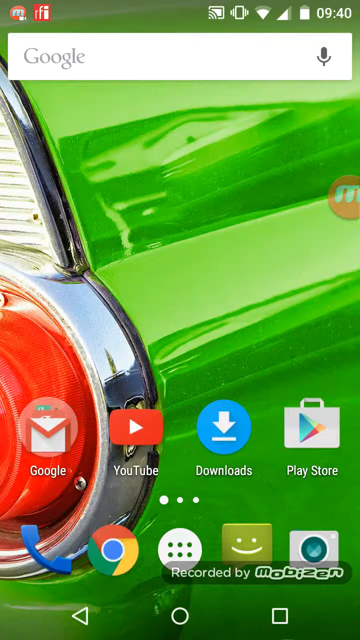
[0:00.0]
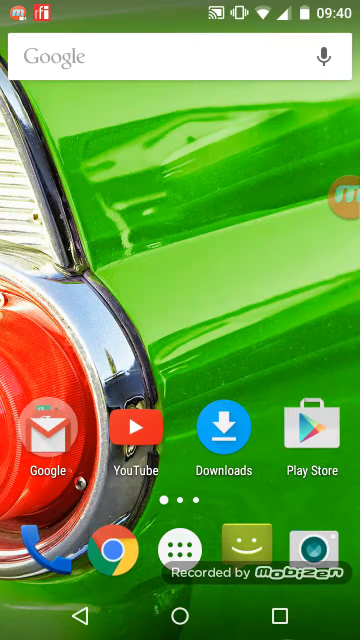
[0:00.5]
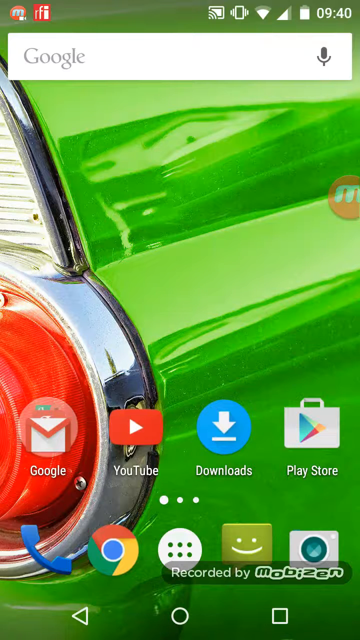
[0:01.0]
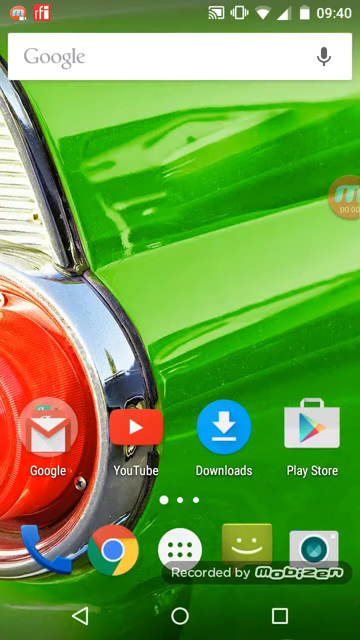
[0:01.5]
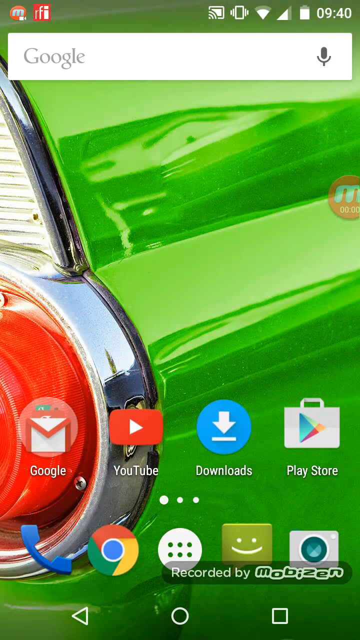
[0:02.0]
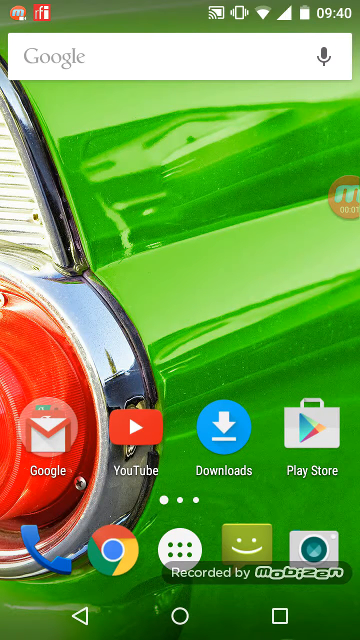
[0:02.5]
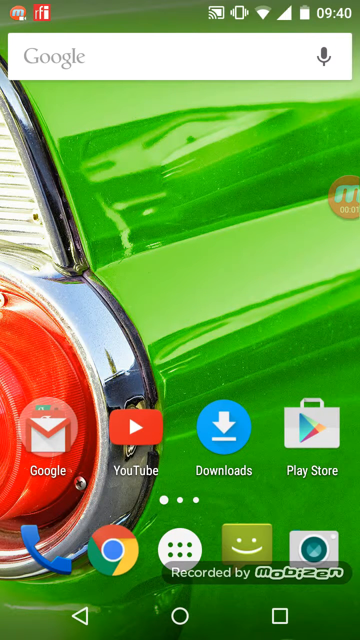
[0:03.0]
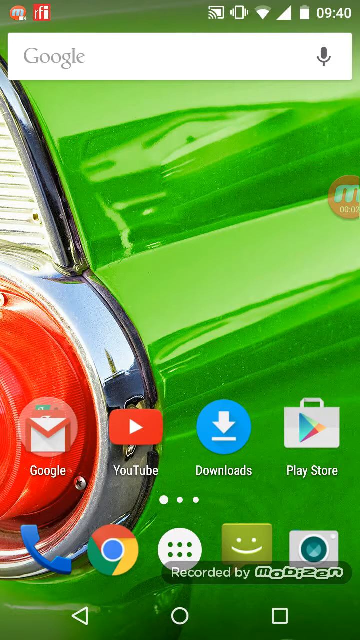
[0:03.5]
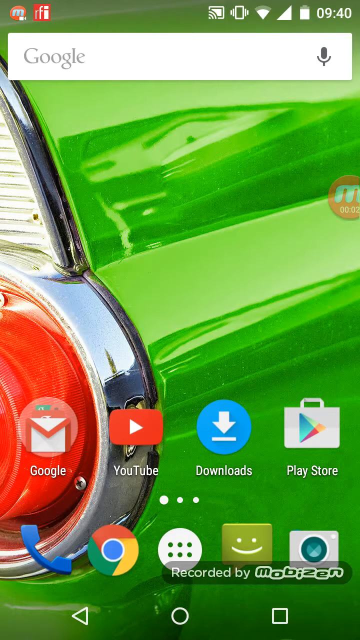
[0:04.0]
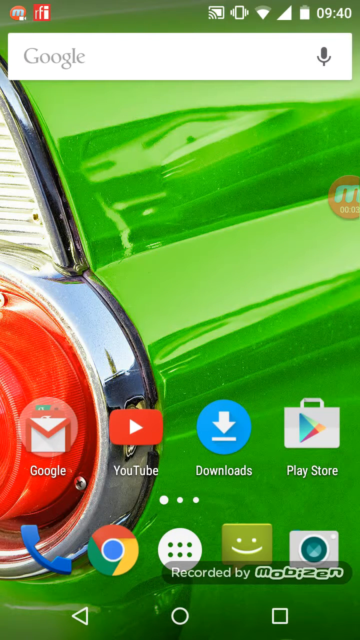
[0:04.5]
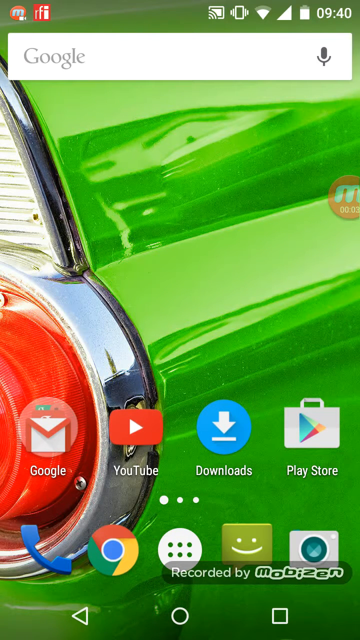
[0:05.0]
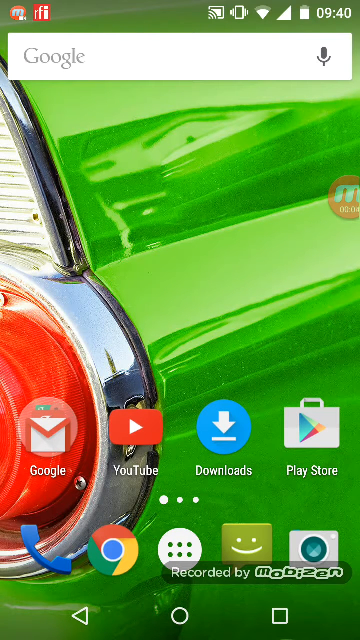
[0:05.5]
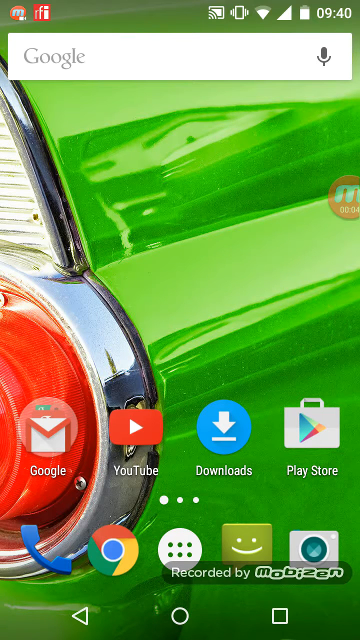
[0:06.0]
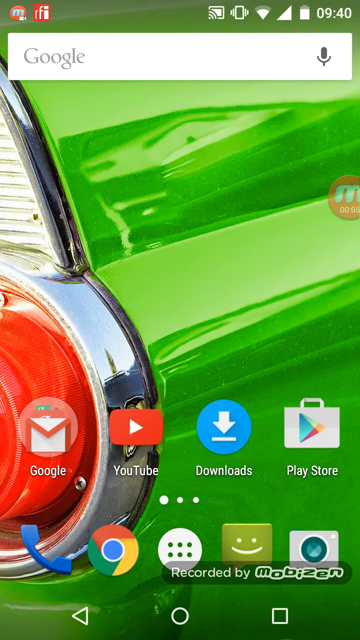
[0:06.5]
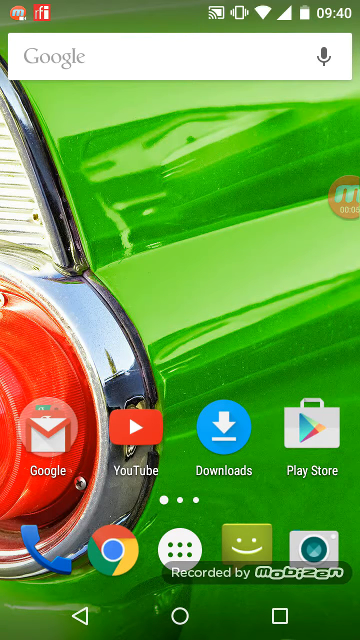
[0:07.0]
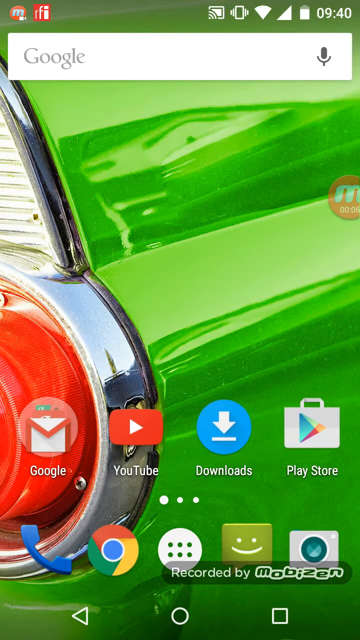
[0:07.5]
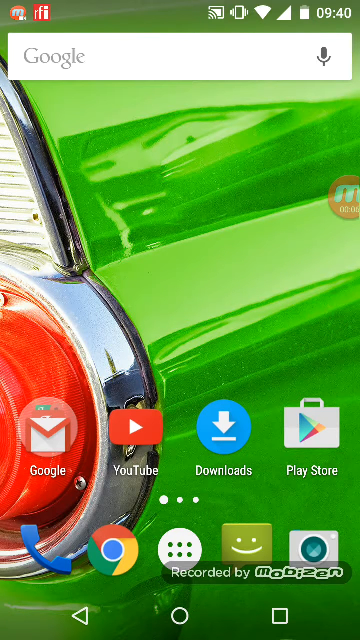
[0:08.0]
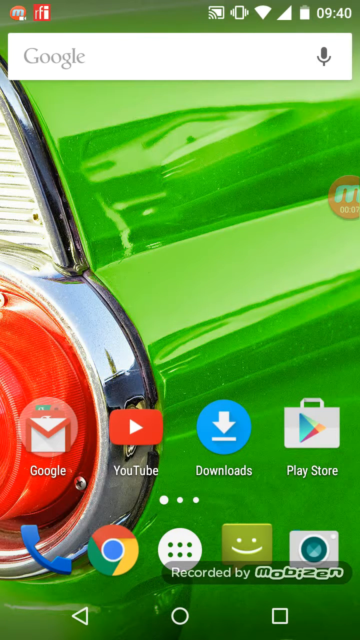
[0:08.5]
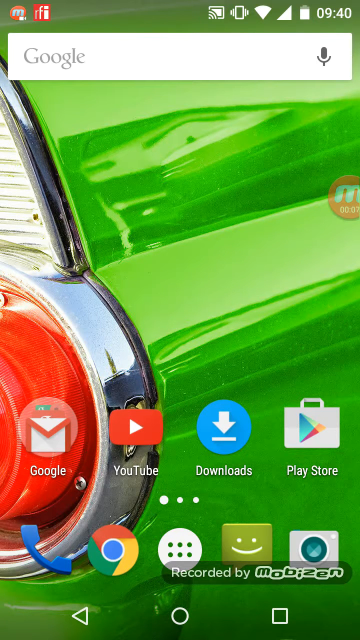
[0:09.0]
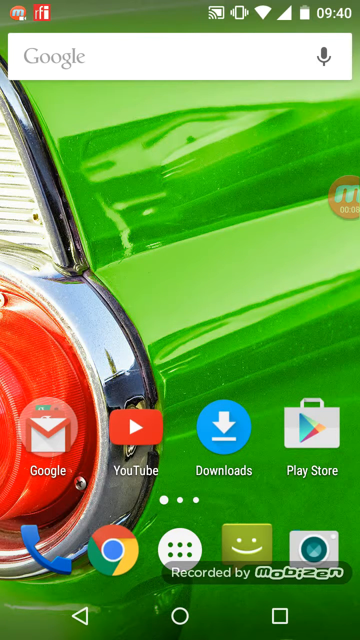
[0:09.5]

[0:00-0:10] An Android mobile phone screen shows Google apps, including Google, YouTube, download options, Play Store and Chrome, along with other necessary apps.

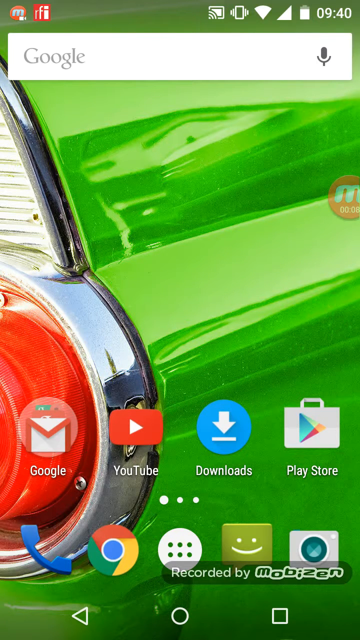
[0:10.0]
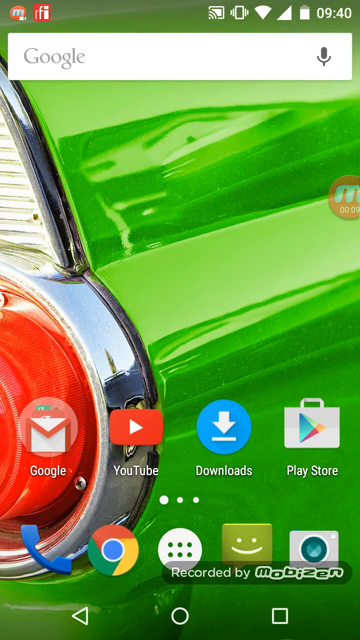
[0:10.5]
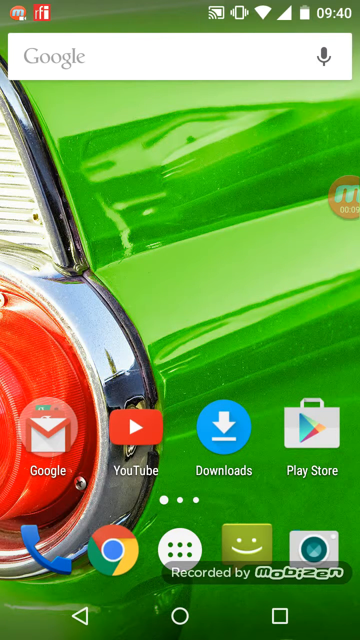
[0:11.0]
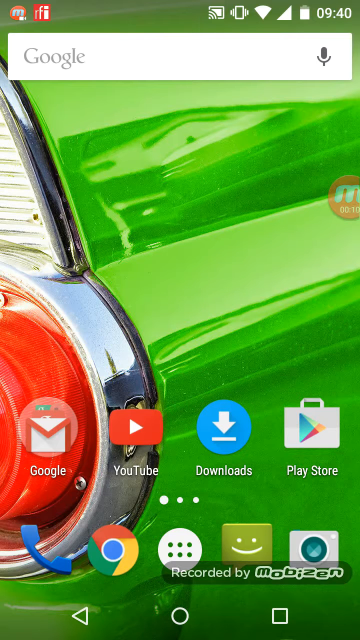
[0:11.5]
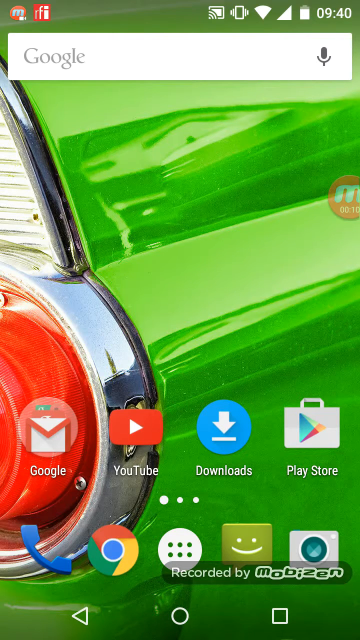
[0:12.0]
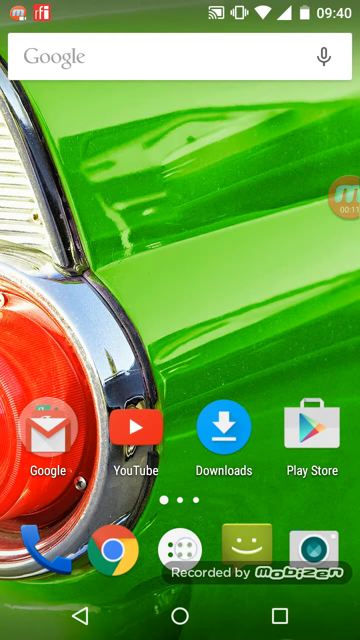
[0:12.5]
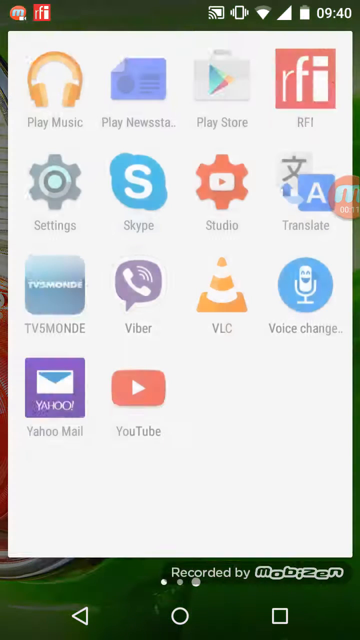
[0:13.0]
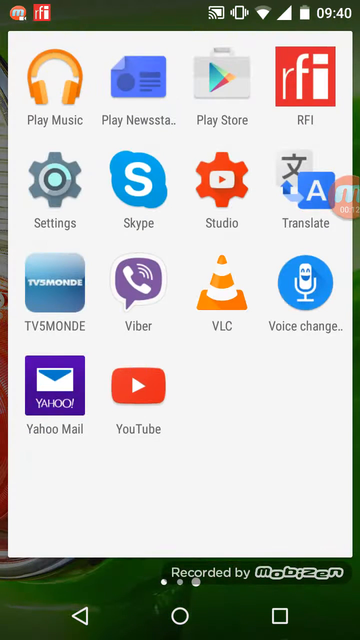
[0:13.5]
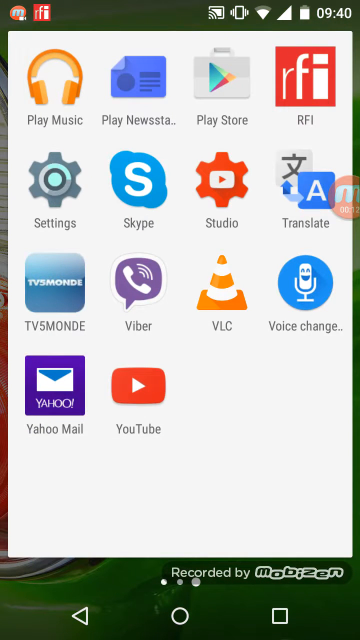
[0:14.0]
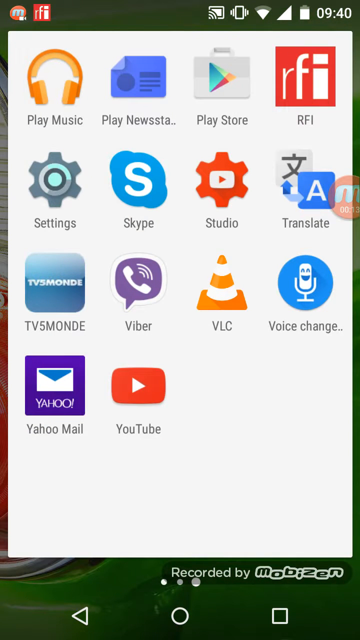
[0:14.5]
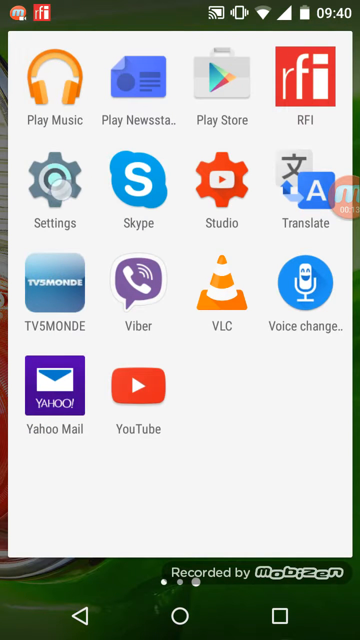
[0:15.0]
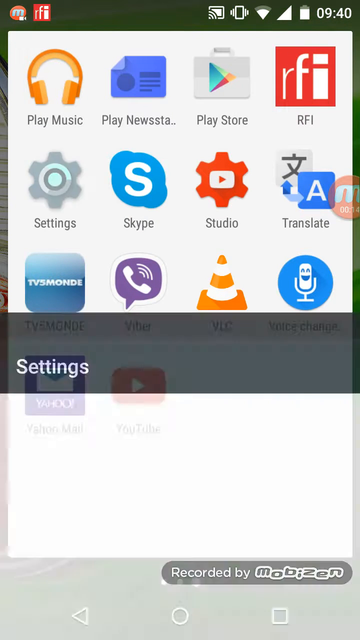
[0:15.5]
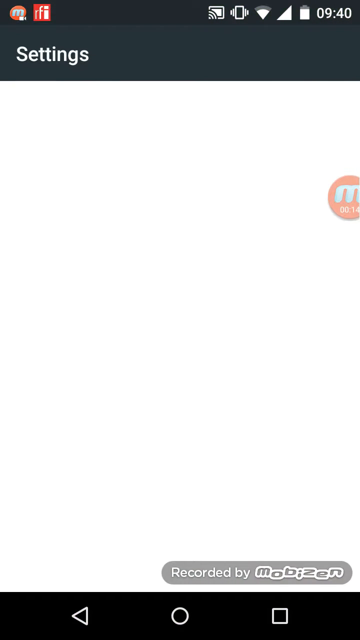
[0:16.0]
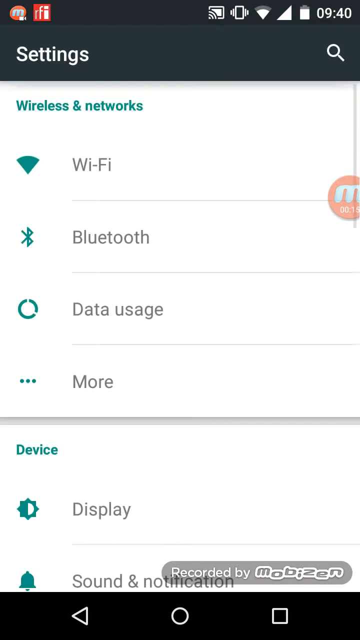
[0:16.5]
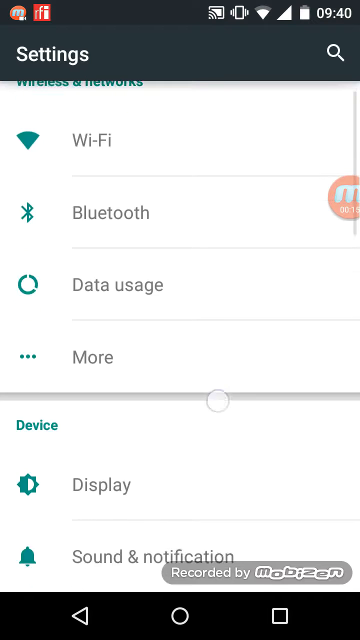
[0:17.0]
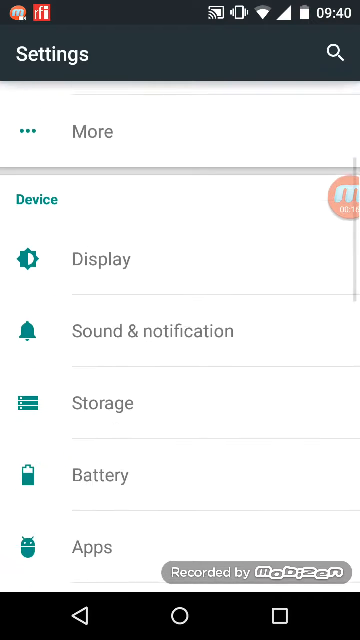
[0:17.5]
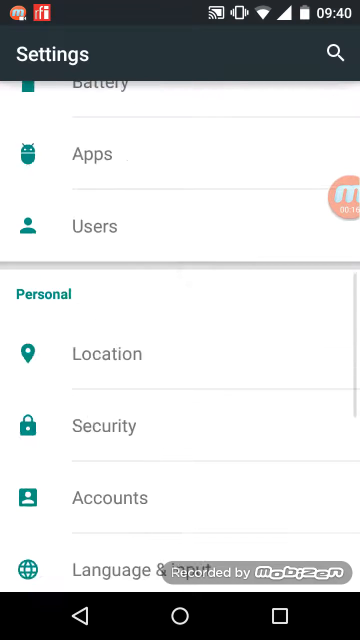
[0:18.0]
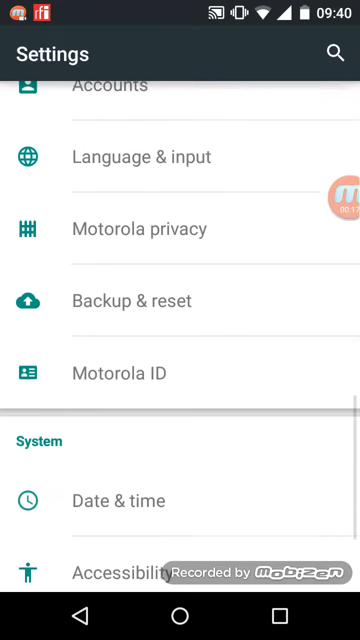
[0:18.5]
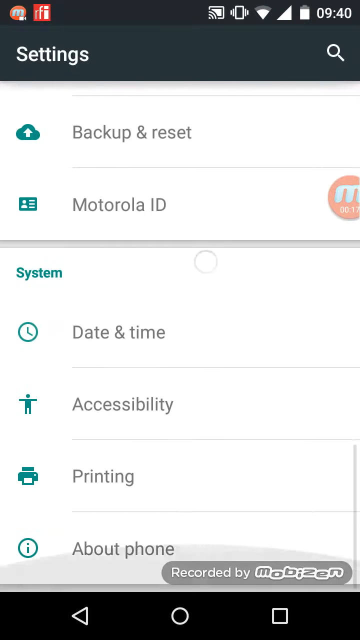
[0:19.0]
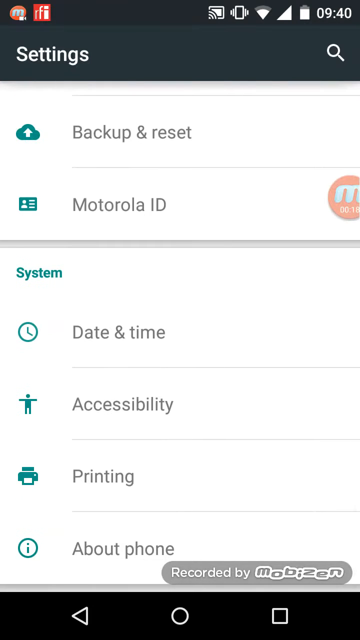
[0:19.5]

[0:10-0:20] The phone's status shows the time as apparently 9:40 p.m., the phone in vibration mode, one SIM, and the battery charge almost full.